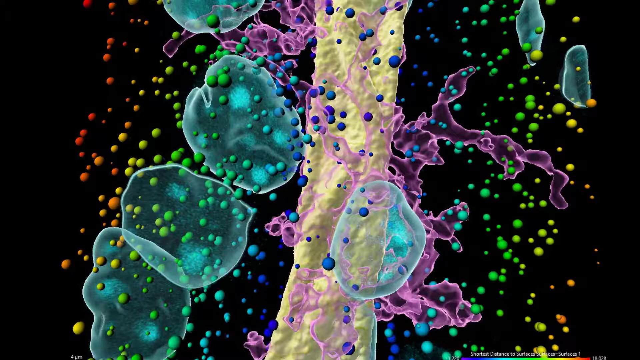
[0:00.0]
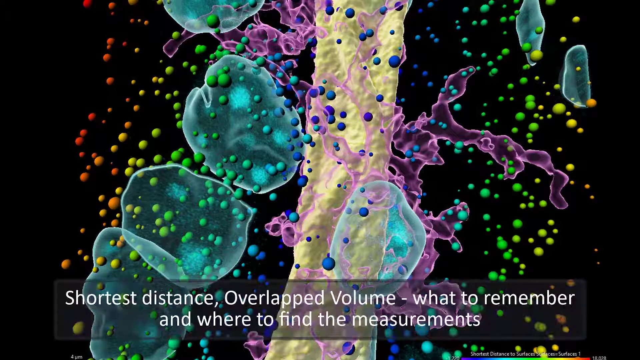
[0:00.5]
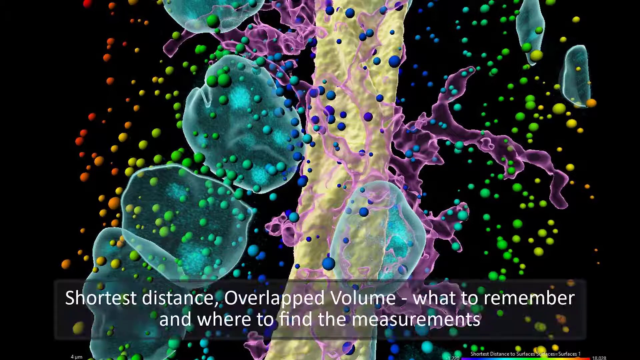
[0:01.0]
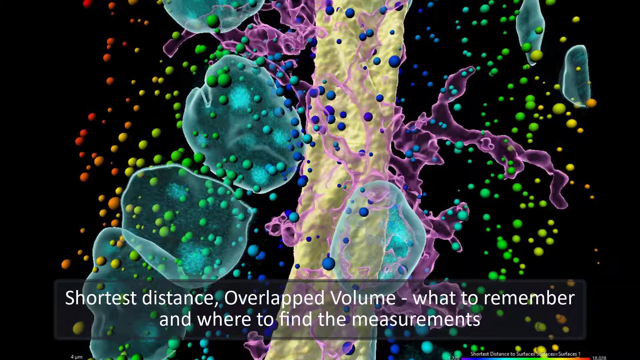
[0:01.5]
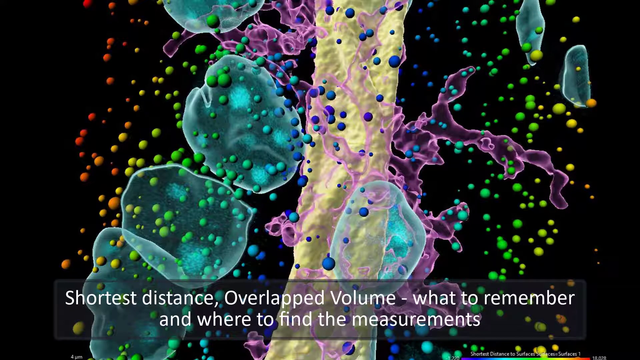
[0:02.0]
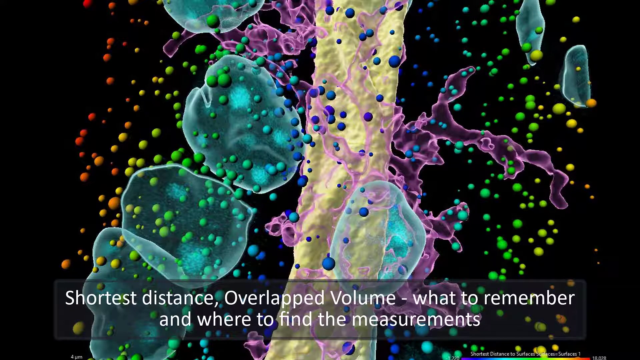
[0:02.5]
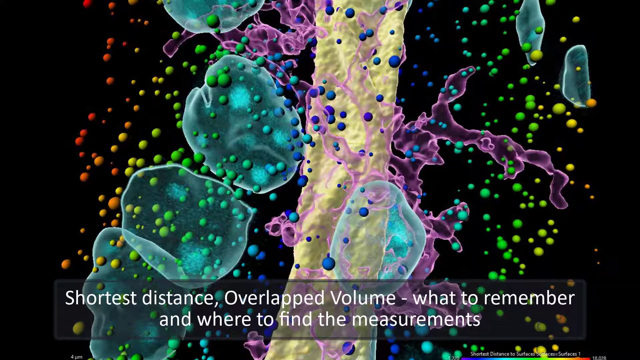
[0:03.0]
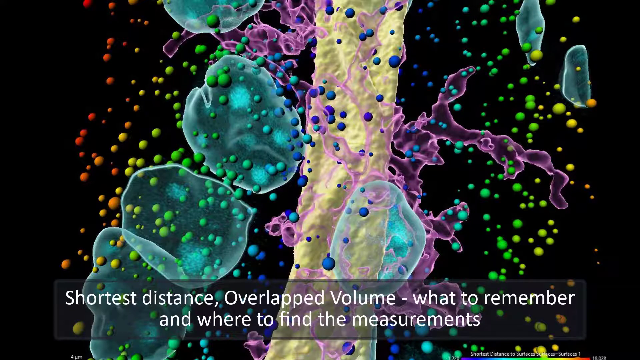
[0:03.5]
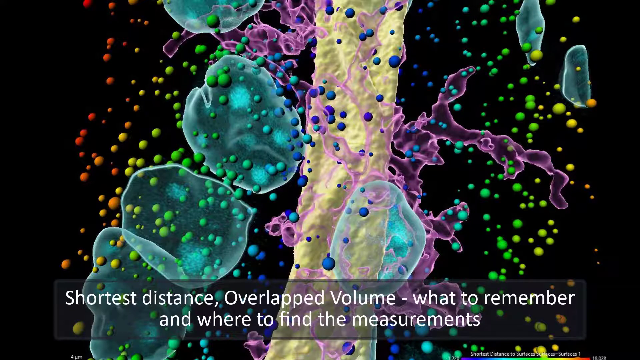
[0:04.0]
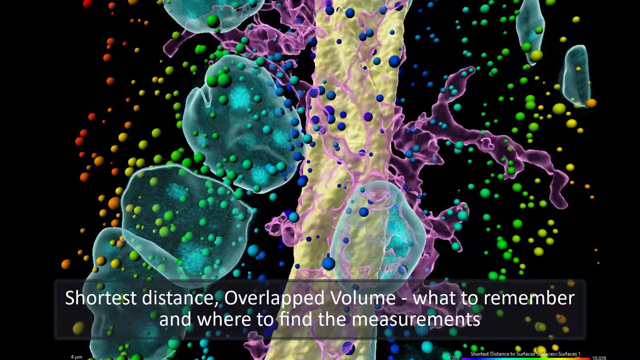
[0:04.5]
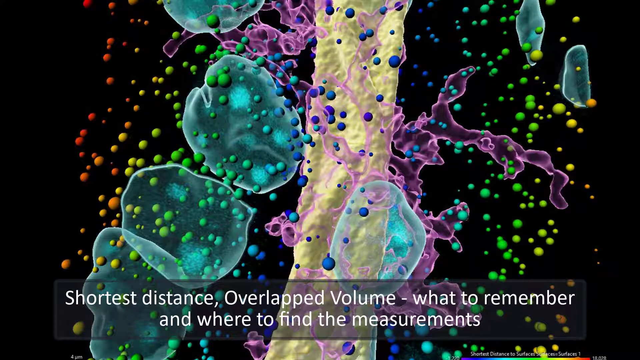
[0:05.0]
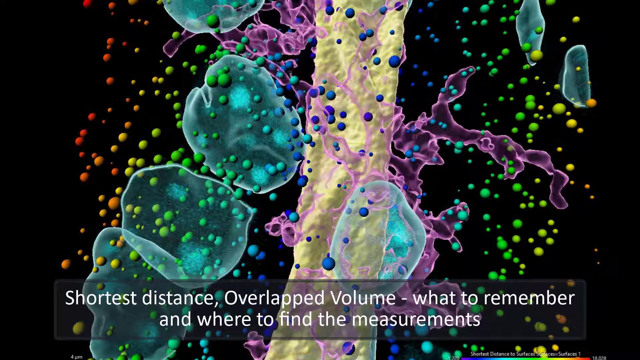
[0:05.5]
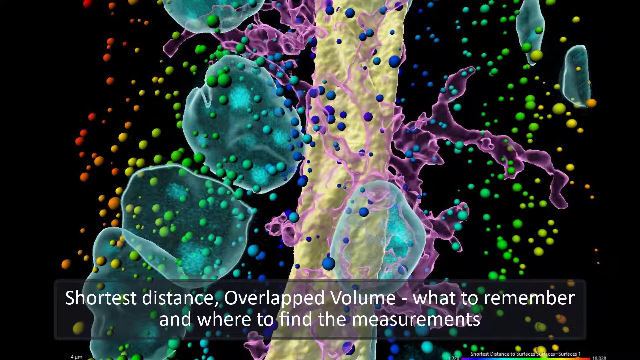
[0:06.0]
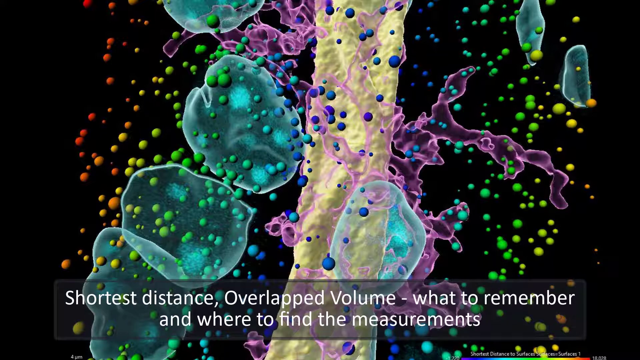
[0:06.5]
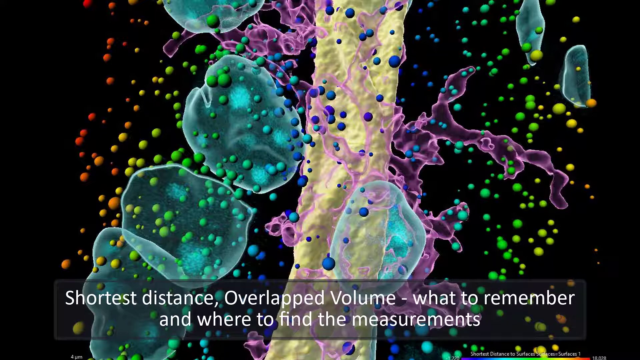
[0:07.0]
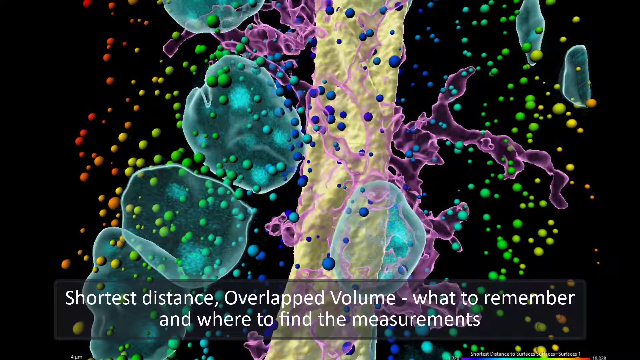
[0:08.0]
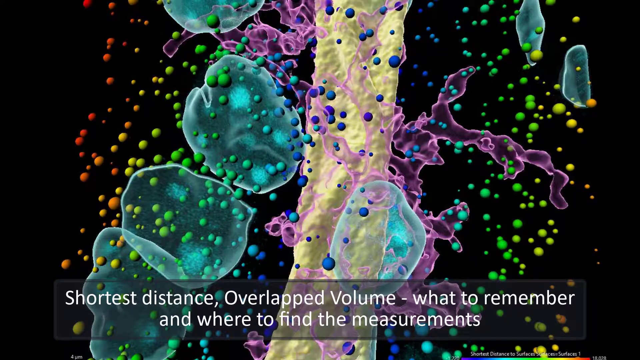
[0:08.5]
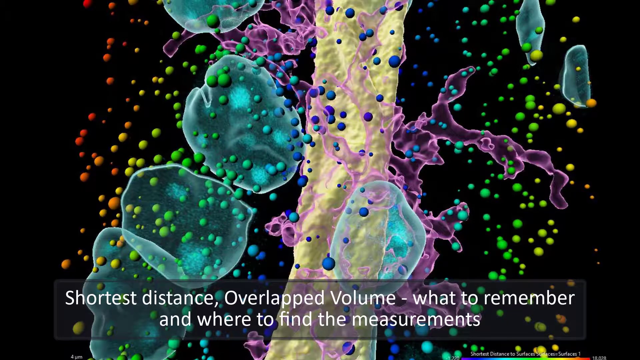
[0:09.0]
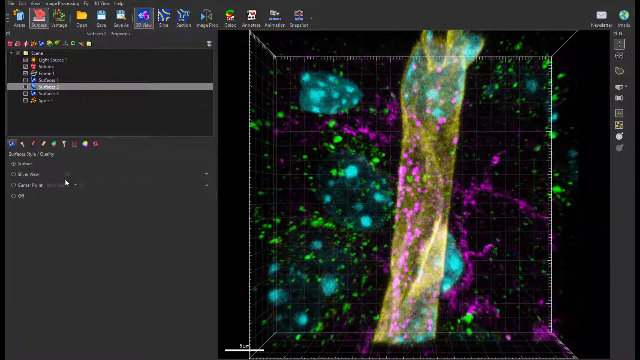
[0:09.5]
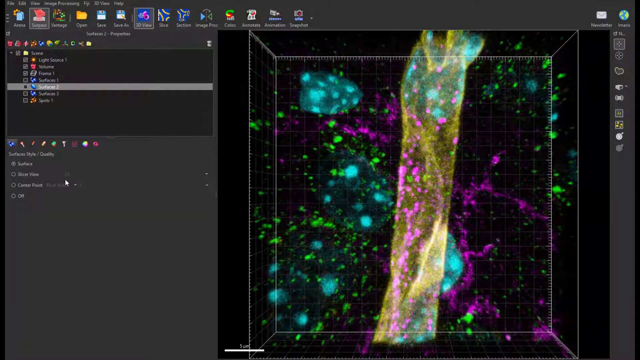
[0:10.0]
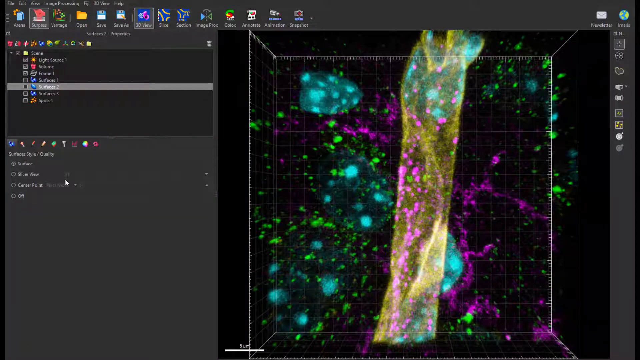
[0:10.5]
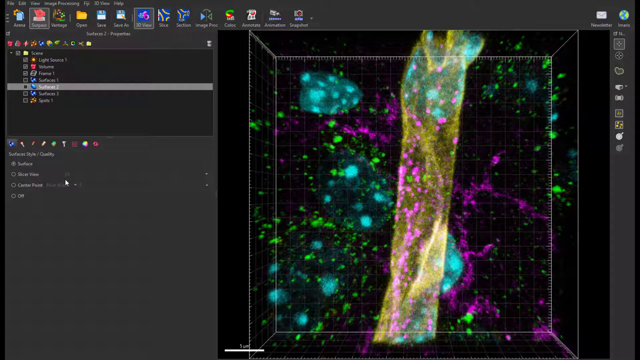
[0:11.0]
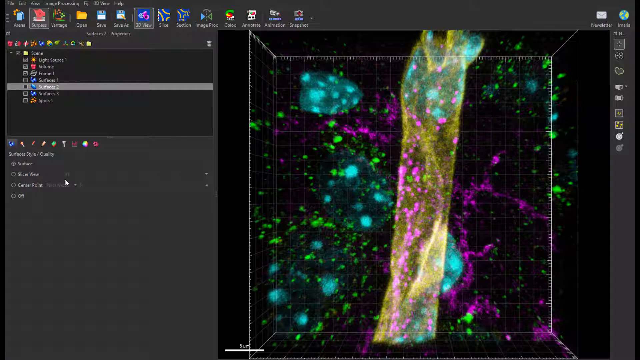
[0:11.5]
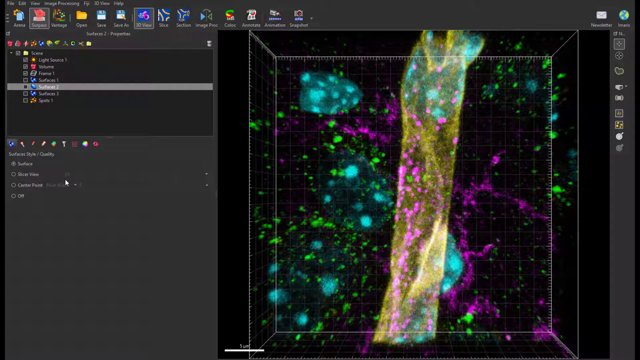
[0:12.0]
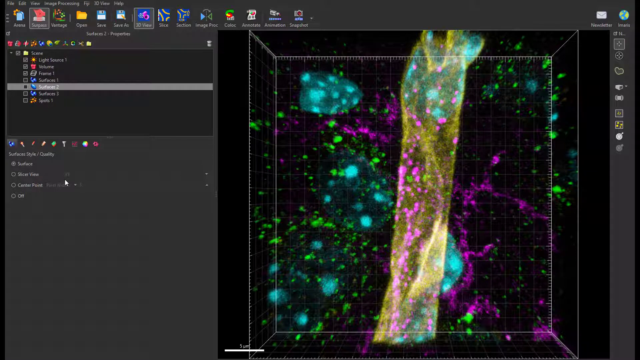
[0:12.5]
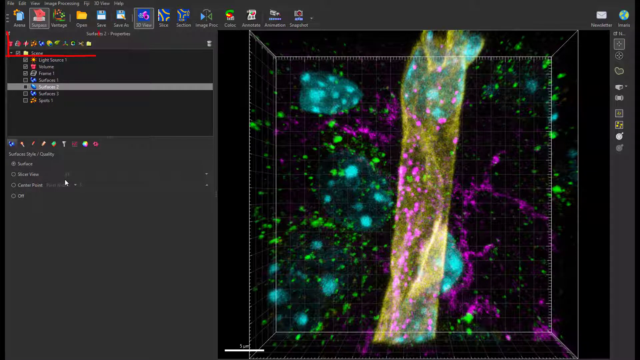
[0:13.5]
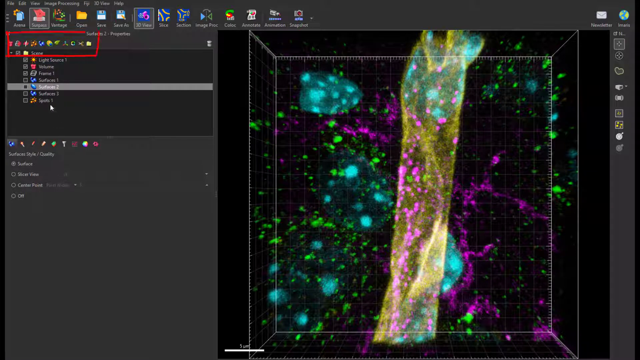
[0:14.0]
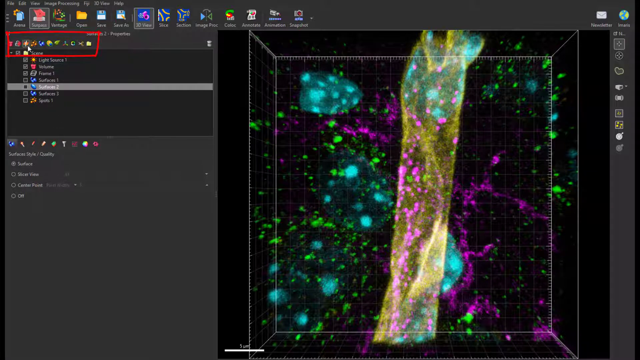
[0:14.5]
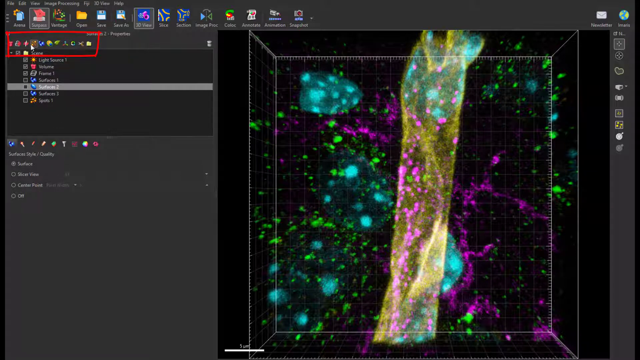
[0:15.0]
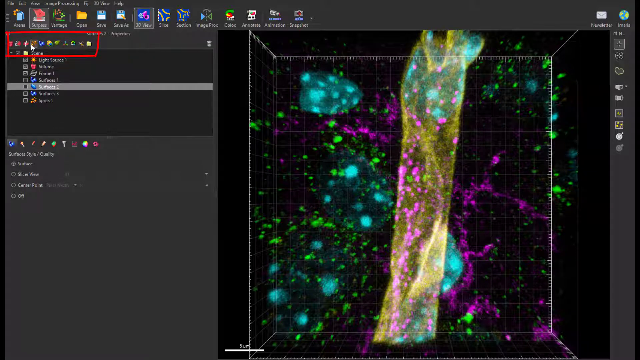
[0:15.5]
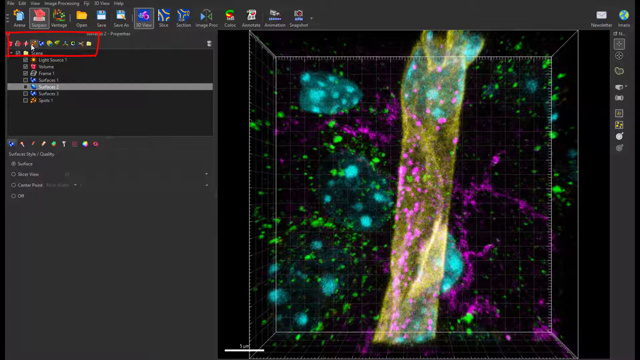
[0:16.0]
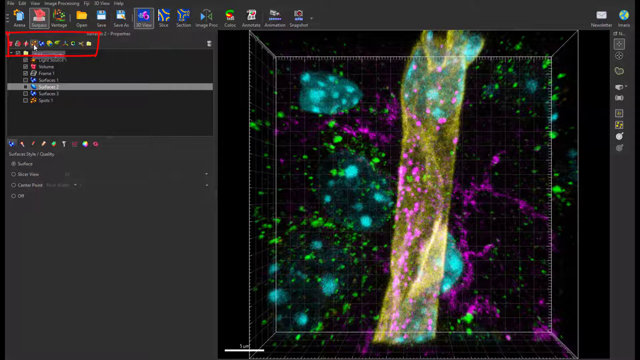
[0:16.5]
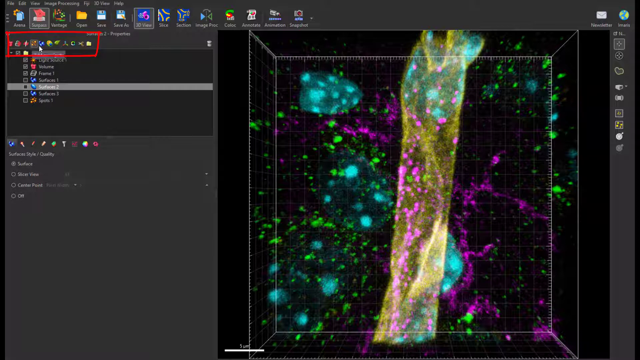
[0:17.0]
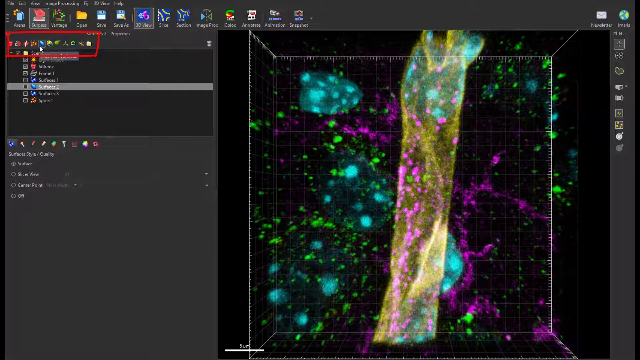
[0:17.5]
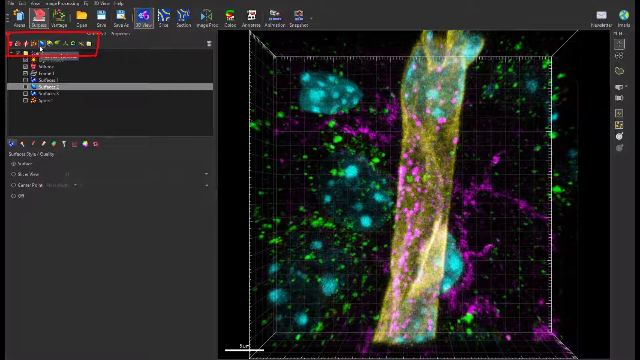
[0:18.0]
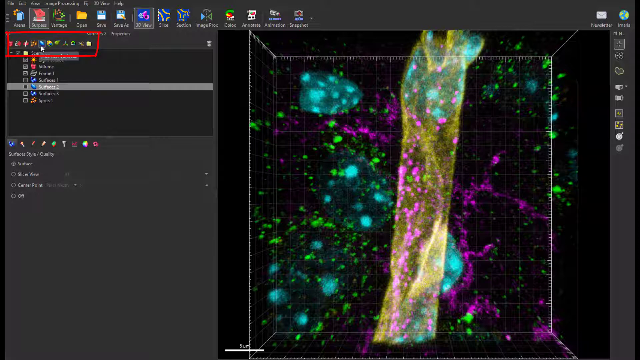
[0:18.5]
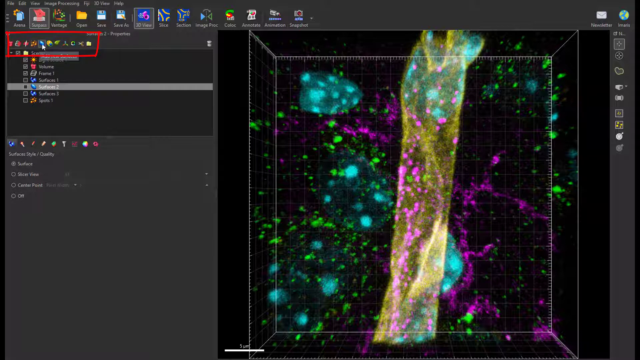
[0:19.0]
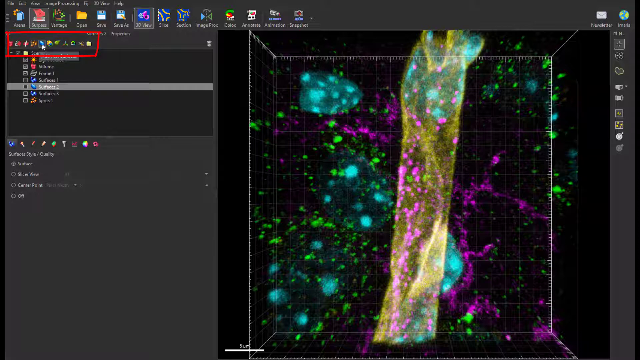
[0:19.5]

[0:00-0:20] An animation, apparently some kind of science animation, shows many colored balls against a black background. Starting on the right side of the screen, the balls are red, then two different shades of orange, then yellow, then green; toward the middle of the screen they are blue, then a lighter blue, then a turquoise or teal color, then different shades of green, then different shades of yellow, then a light orange. At the bottom, white text reads "shortest distance, overlap the volume - what to remember and where to find the measurements." The circles lie on top of a thick object in the middle, possibly a bone, though what it is remains unclear. There are also odd objects that look like they are supposed to be circular but are not; some are on the right side, but they are mainly on the left side of the screen, with many different colors over them.